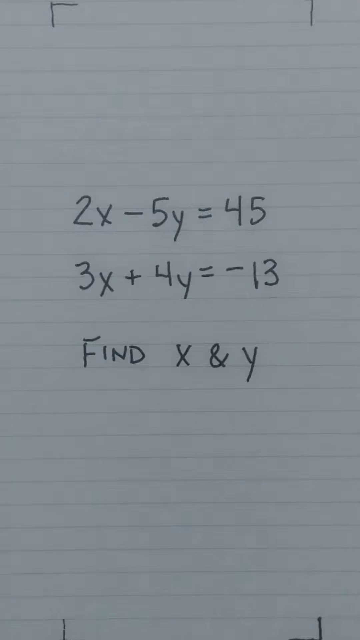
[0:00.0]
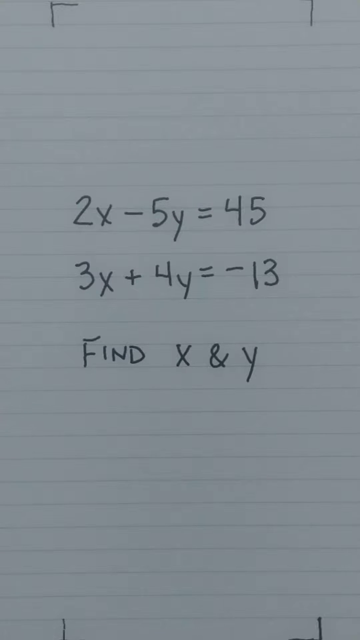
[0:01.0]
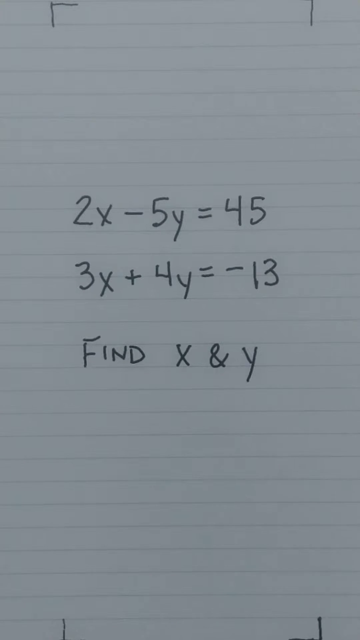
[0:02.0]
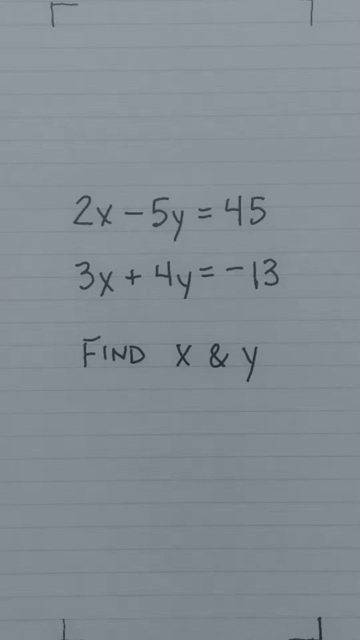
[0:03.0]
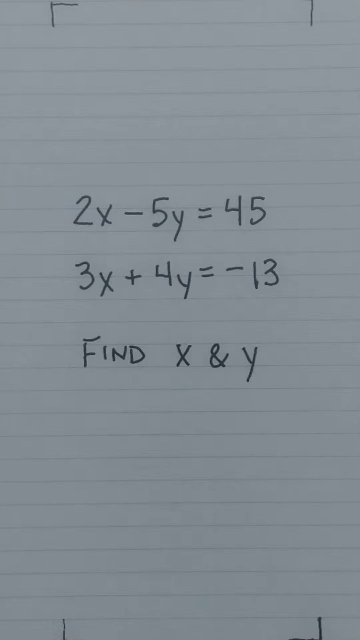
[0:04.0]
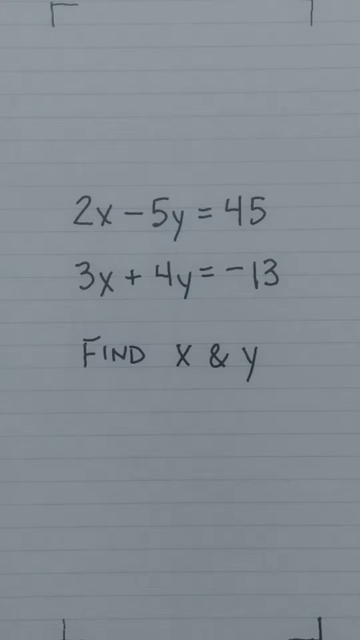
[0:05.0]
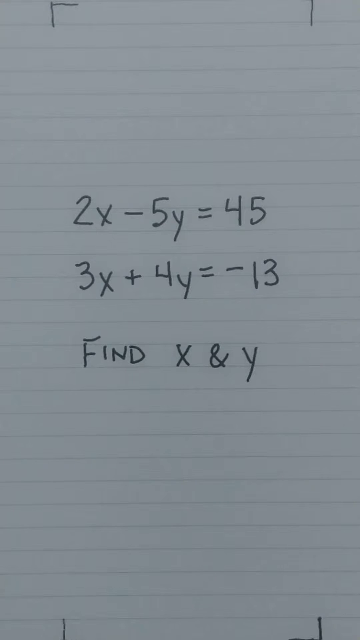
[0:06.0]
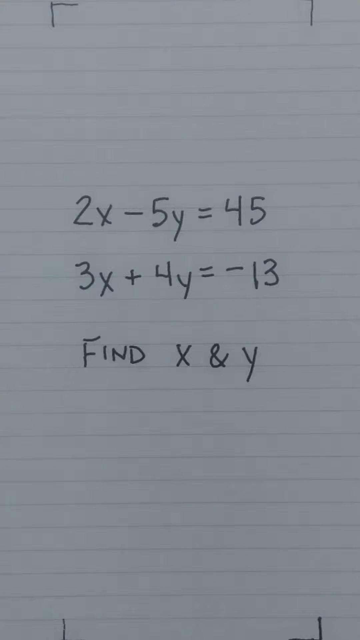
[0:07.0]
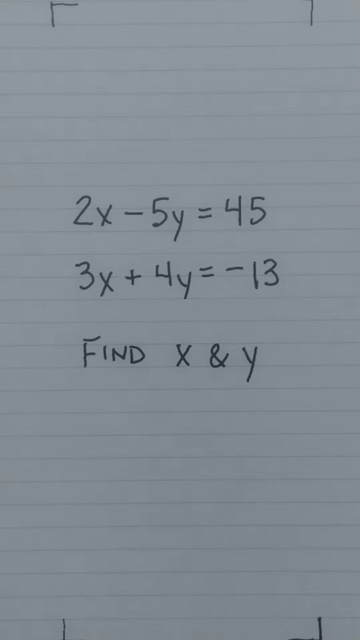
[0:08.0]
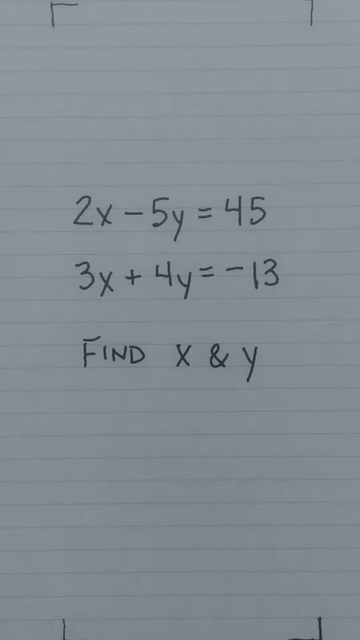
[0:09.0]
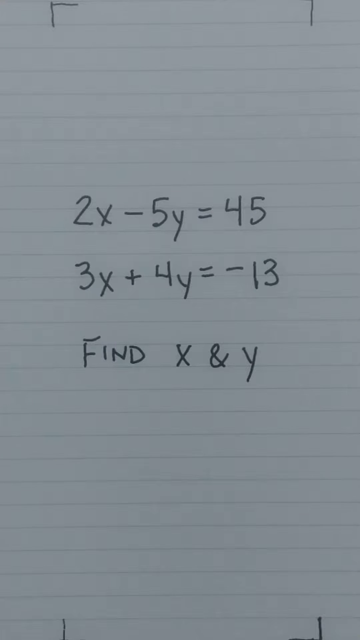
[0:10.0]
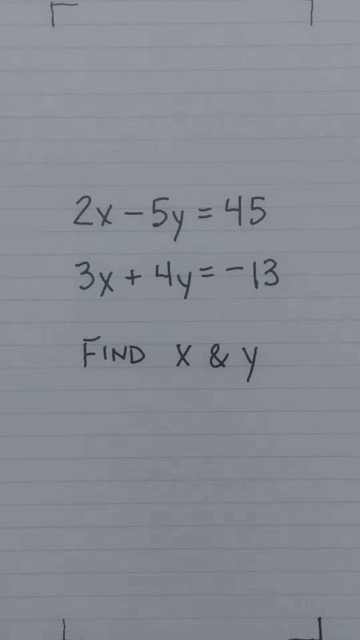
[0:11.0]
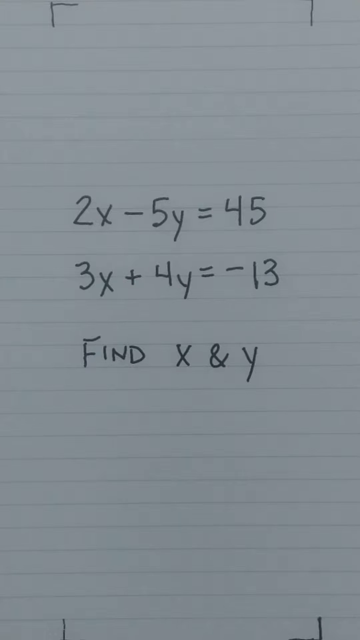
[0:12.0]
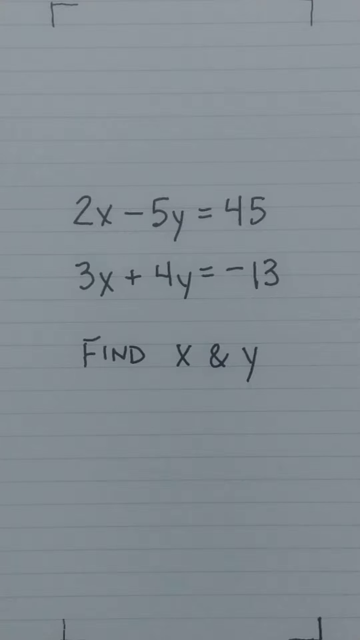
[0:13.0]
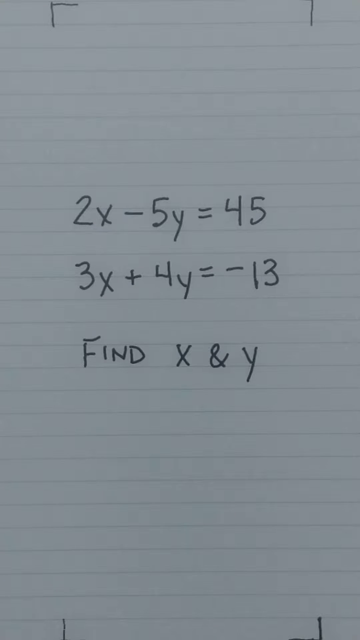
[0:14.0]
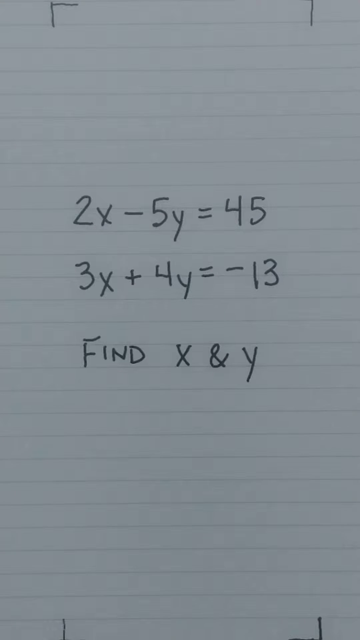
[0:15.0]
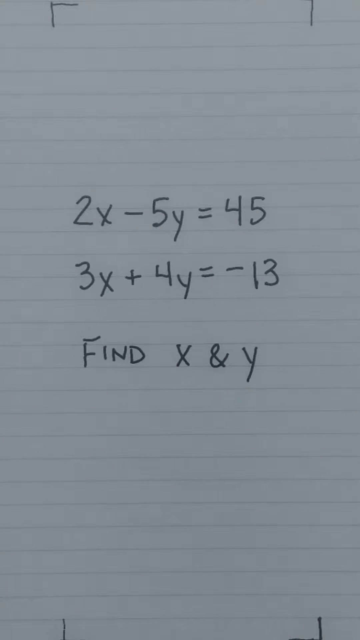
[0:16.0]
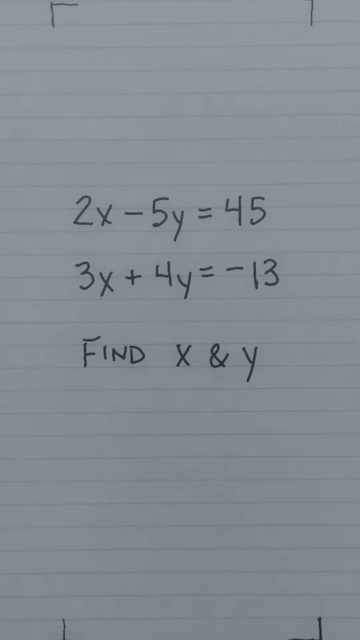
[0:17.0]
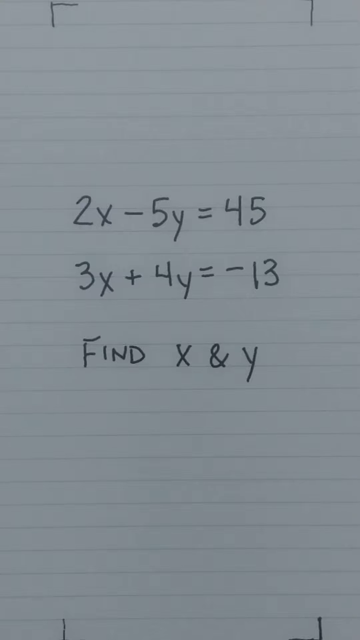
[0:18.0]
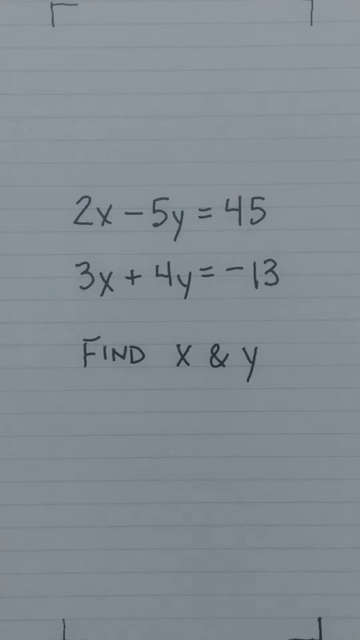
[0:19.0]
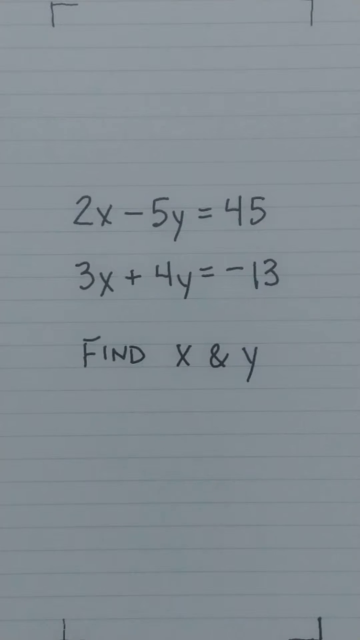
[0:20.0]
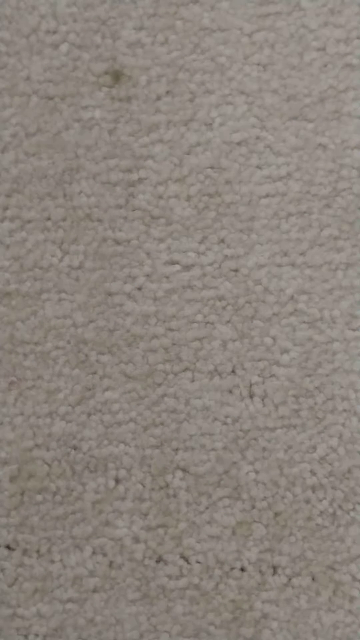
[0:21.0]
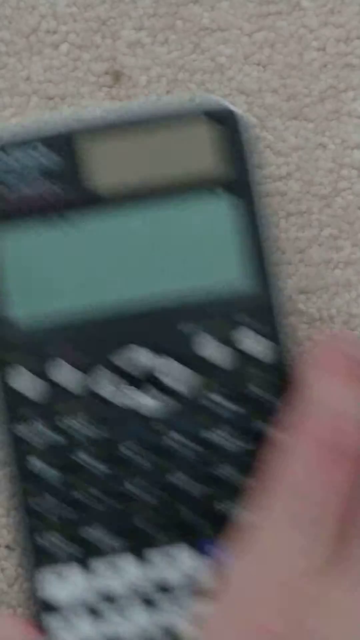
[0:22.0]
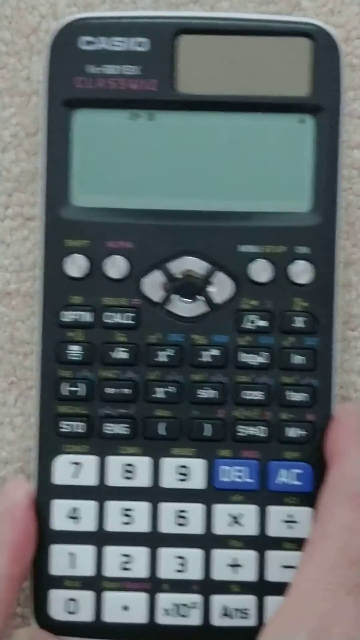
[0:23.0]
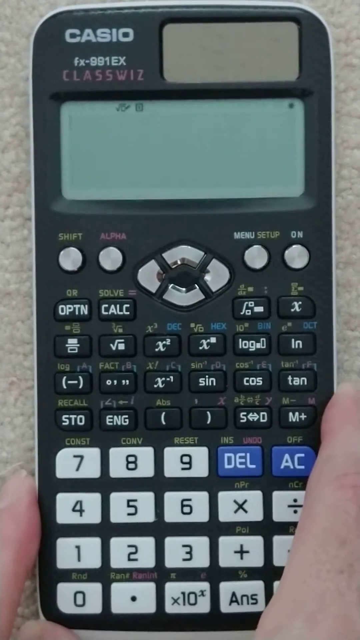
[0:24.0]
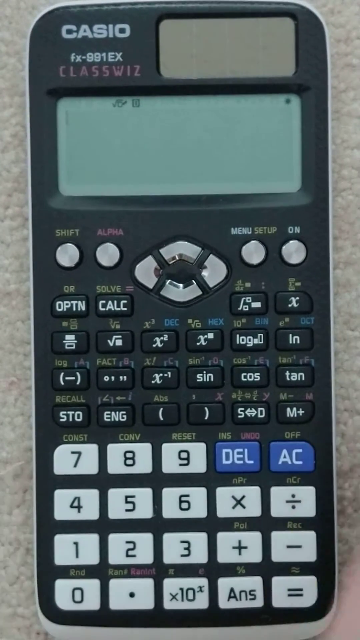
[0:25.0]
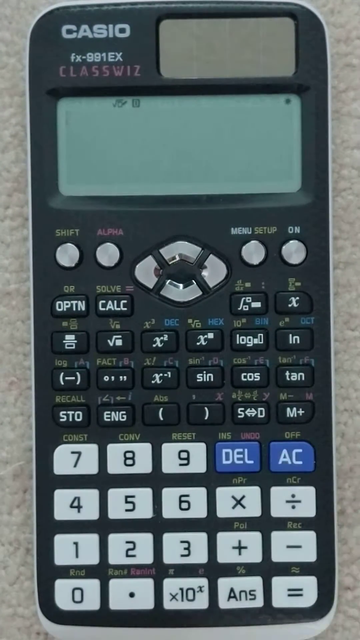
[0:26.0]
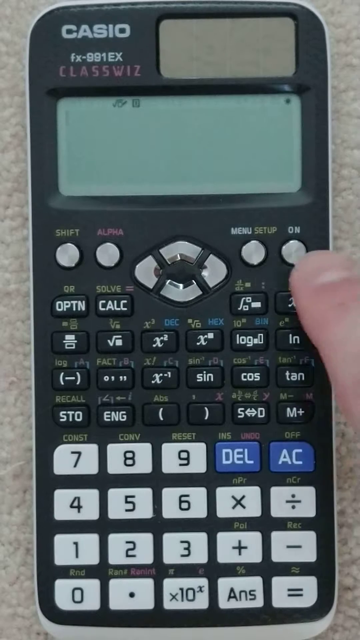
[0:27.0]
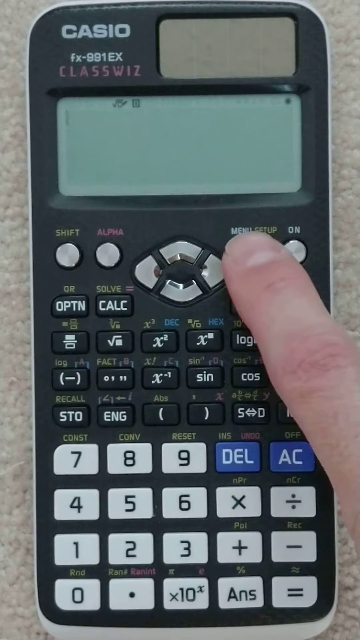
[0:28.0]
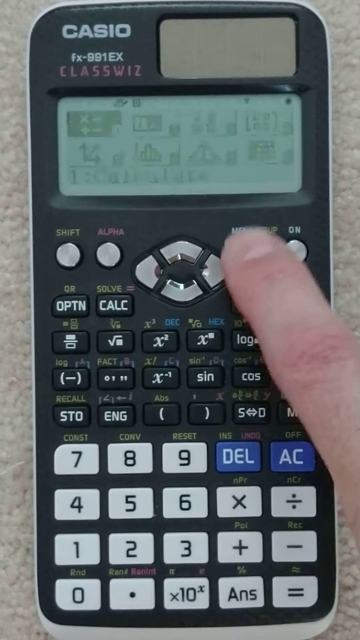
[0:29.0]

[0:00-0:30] The video opens on a mathematical formula written against a line background: 2x − 5y = 45, 3x + 4y = −13, find x and y. It then transitions to a plush background that looks like a fluffy carpet, where a Casio Classwiz scientific calculator is presented; only the user's hand and the calculator are visible. The user presses a menu button at the top, and the calculator's screen changes, filling with all sorts of icons and symbols. The user then presses the downward arrow beneath the screen to proceed.